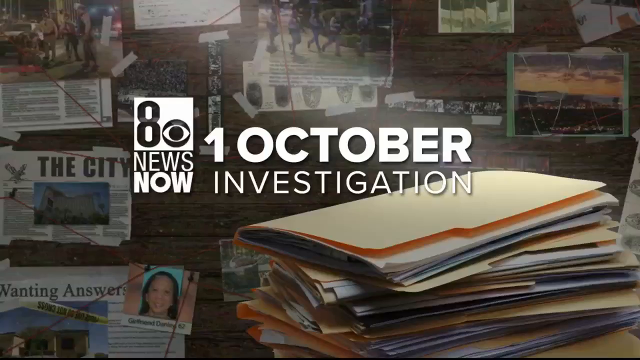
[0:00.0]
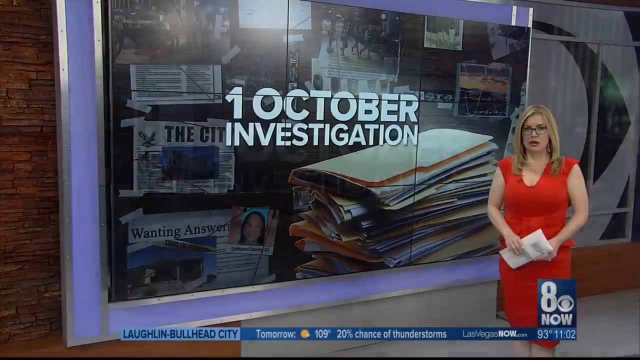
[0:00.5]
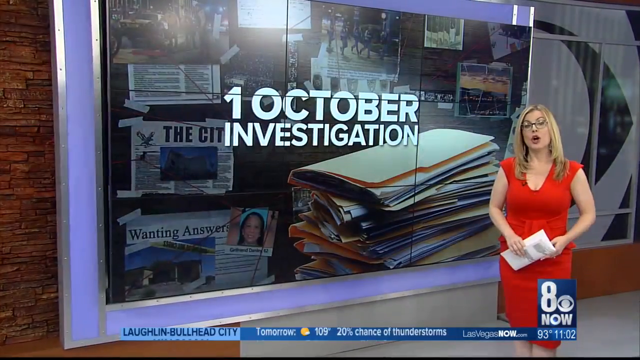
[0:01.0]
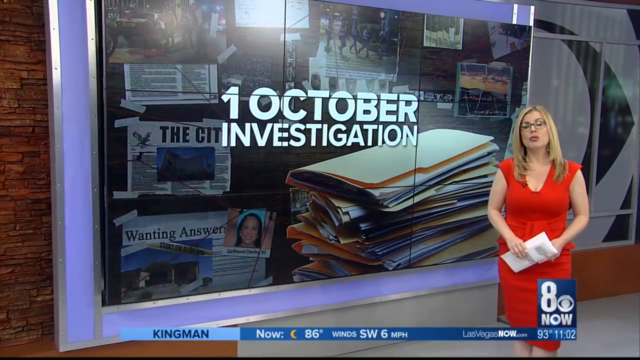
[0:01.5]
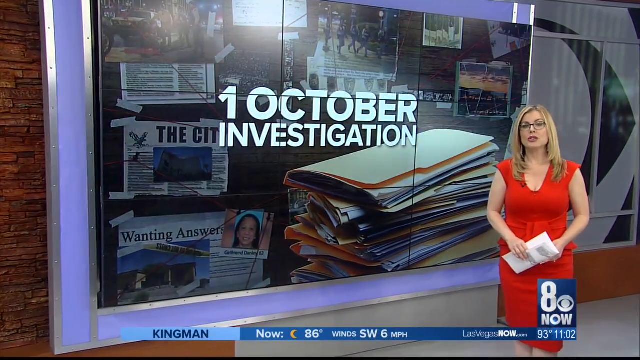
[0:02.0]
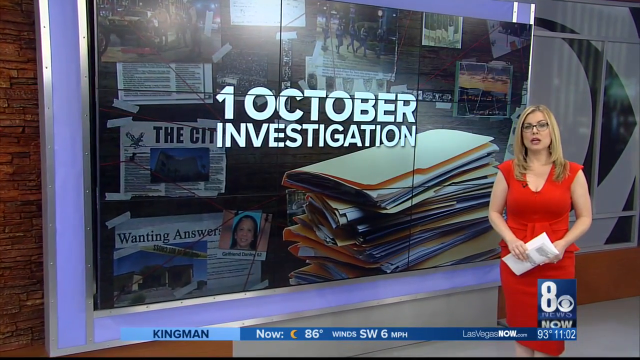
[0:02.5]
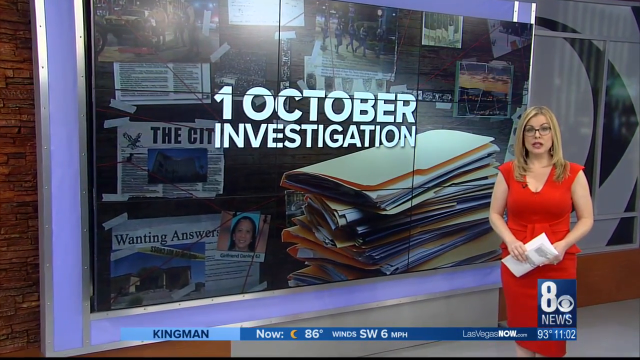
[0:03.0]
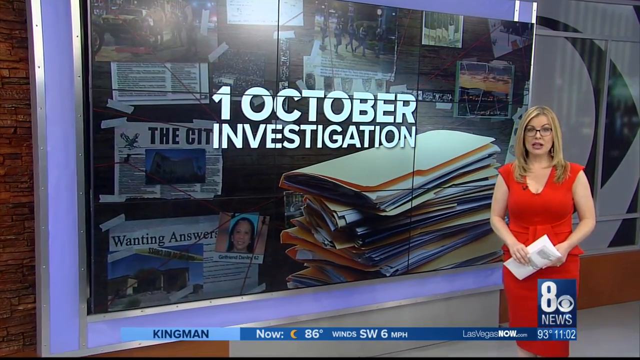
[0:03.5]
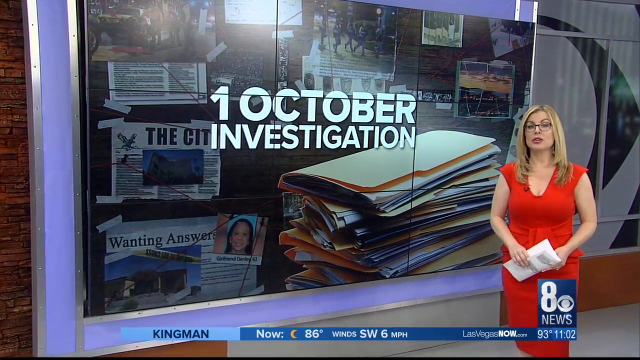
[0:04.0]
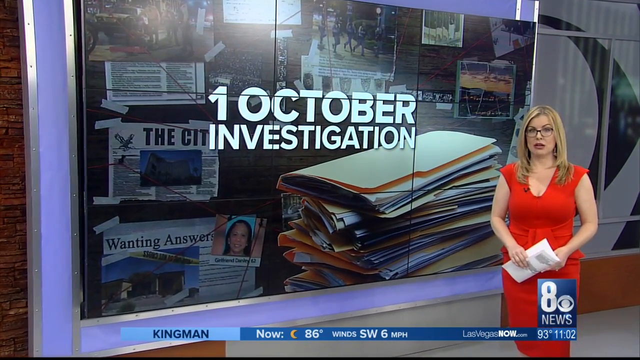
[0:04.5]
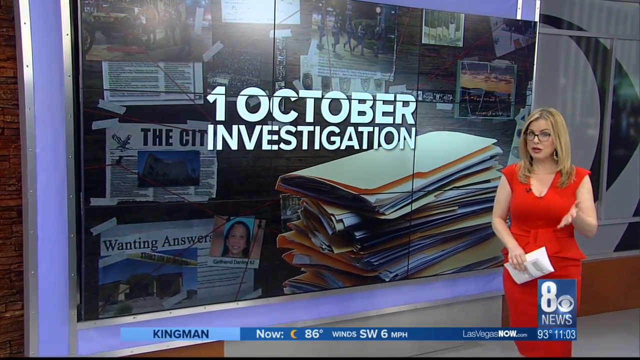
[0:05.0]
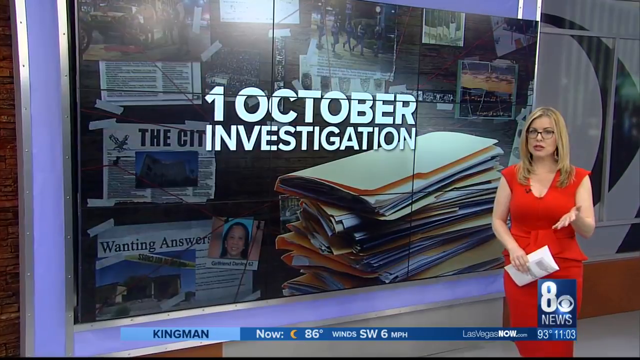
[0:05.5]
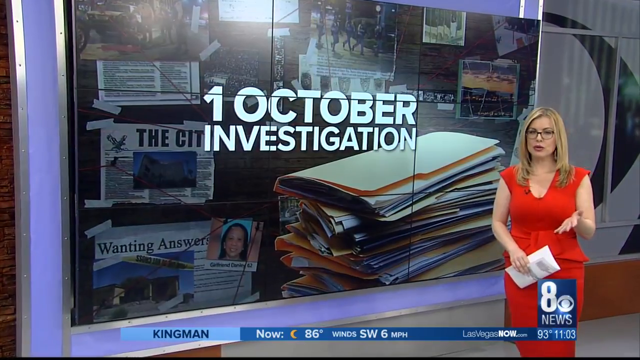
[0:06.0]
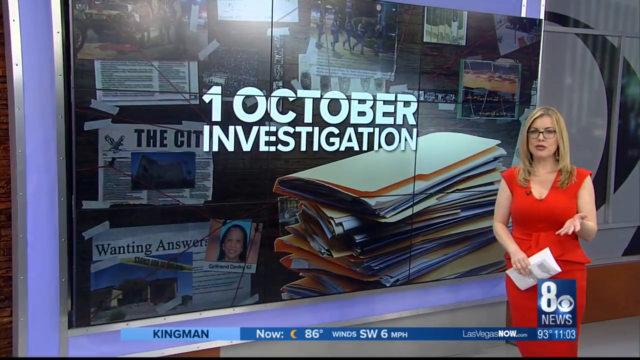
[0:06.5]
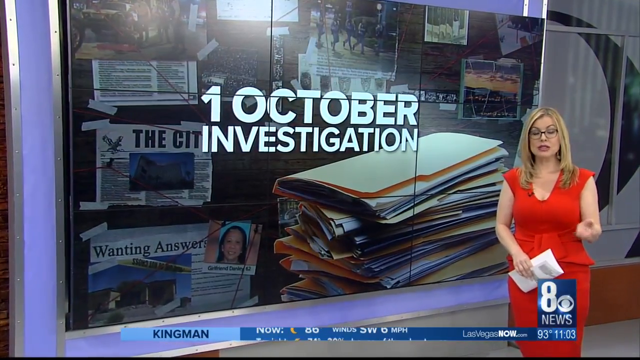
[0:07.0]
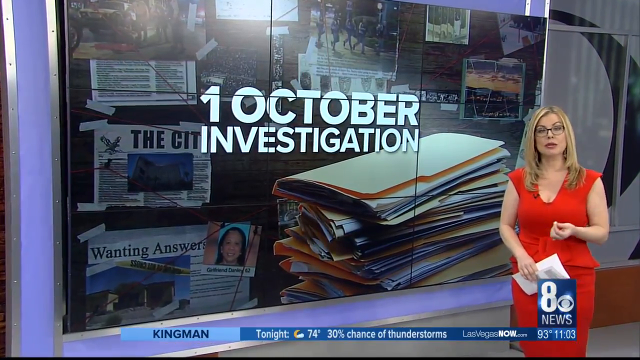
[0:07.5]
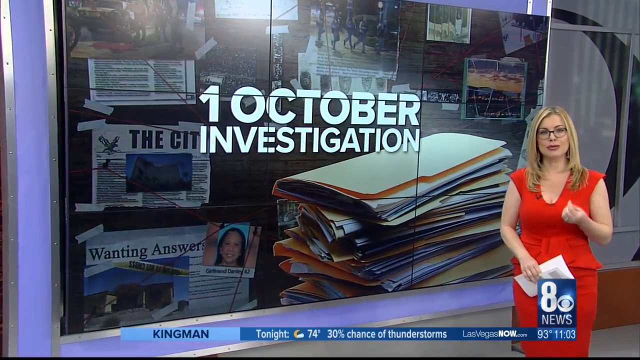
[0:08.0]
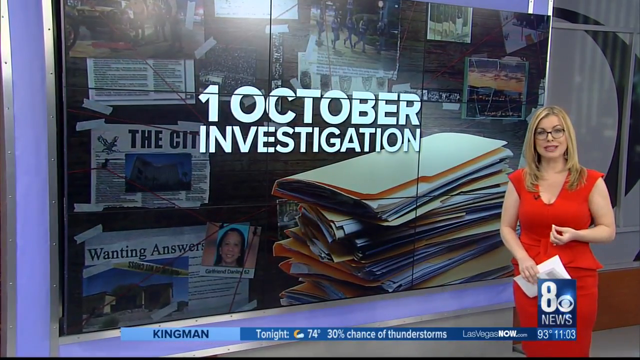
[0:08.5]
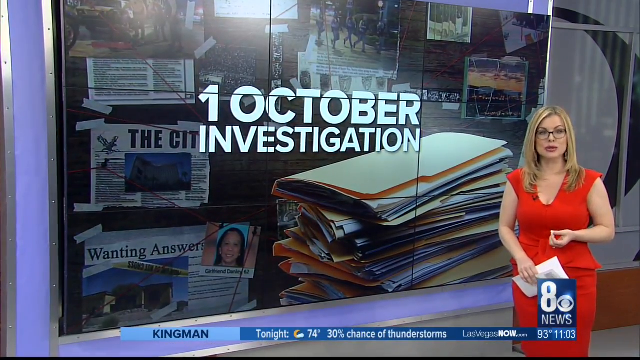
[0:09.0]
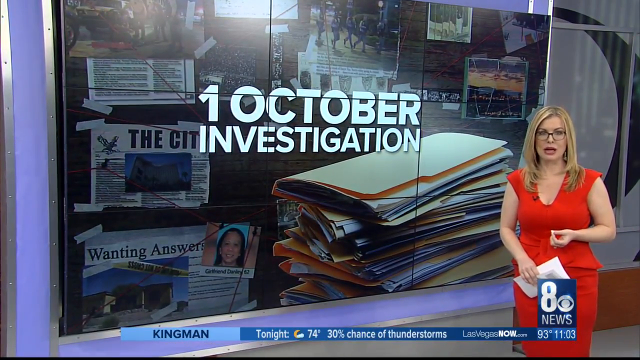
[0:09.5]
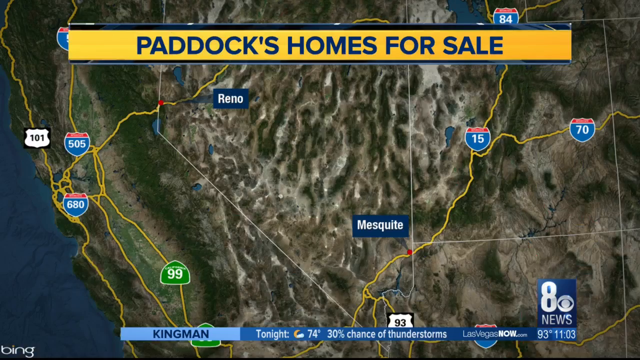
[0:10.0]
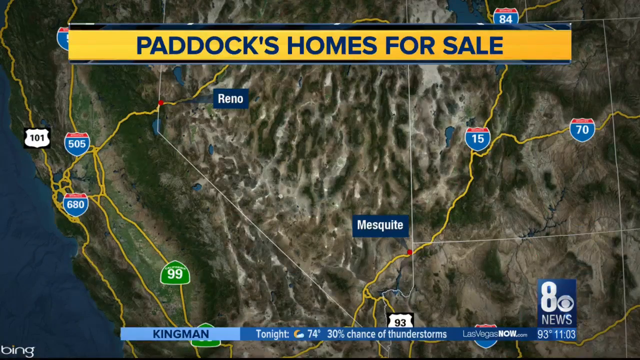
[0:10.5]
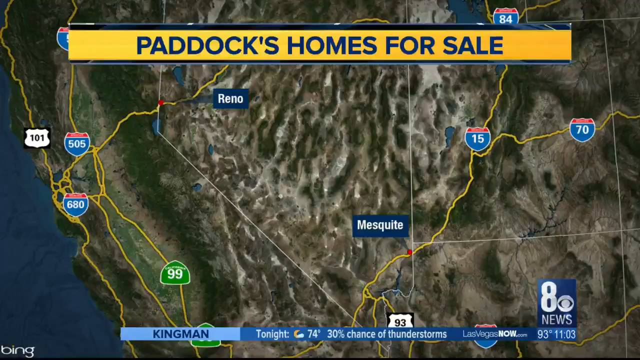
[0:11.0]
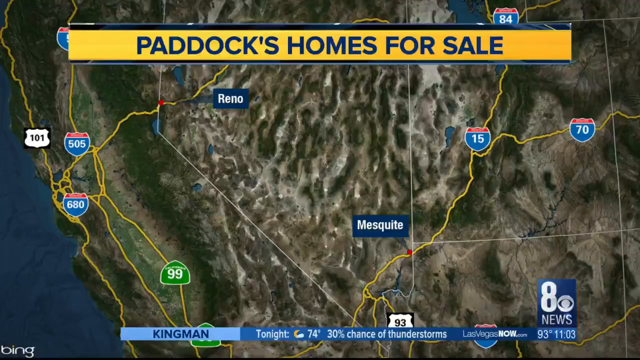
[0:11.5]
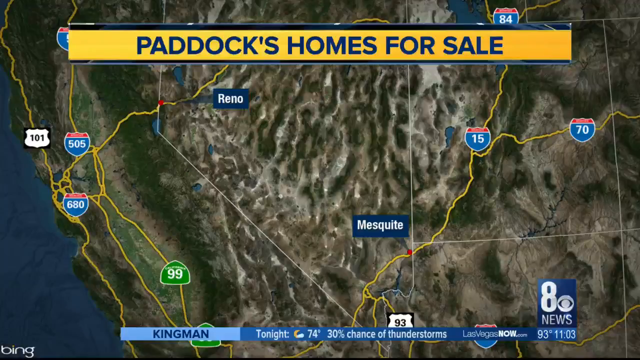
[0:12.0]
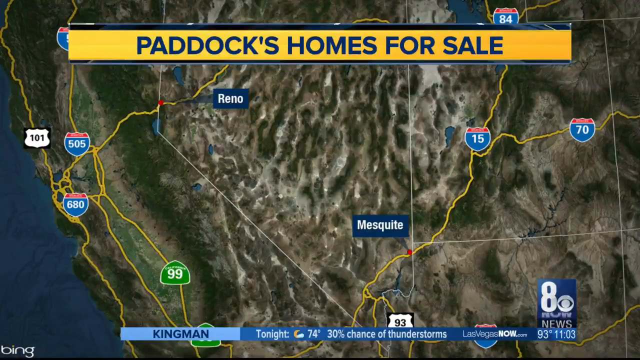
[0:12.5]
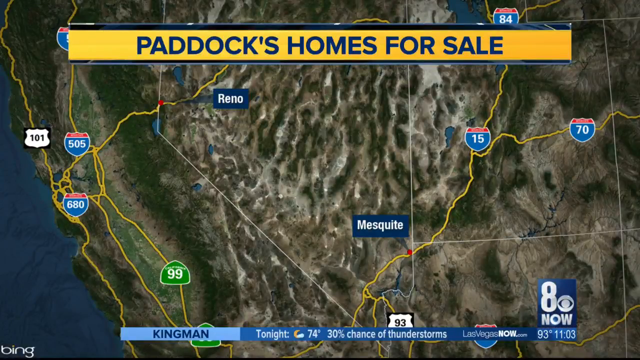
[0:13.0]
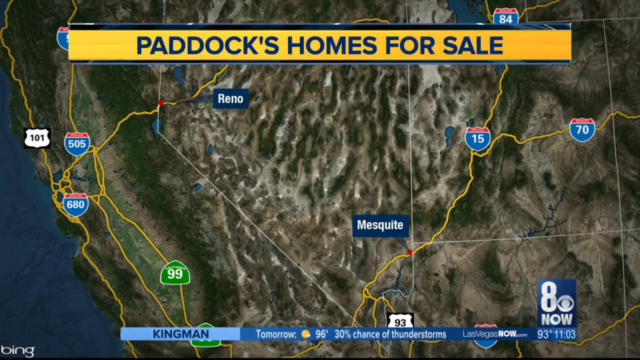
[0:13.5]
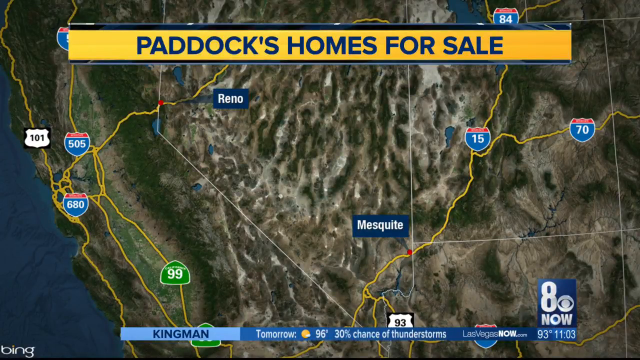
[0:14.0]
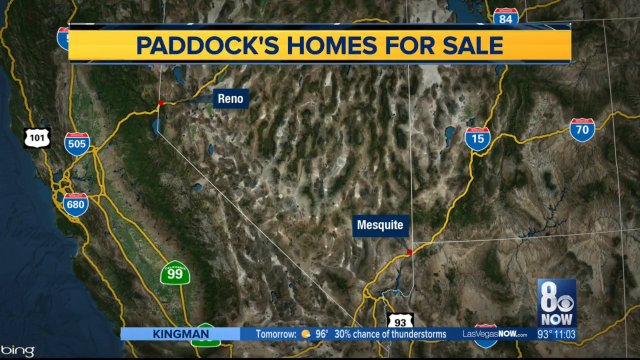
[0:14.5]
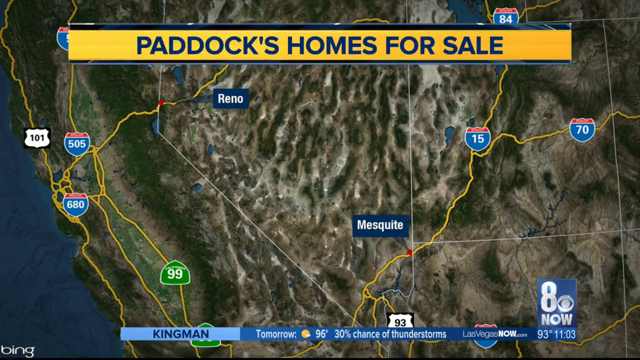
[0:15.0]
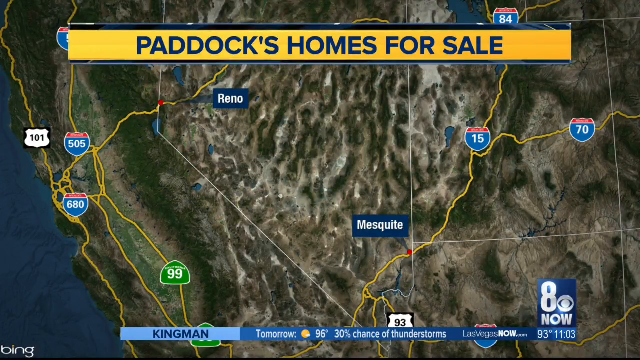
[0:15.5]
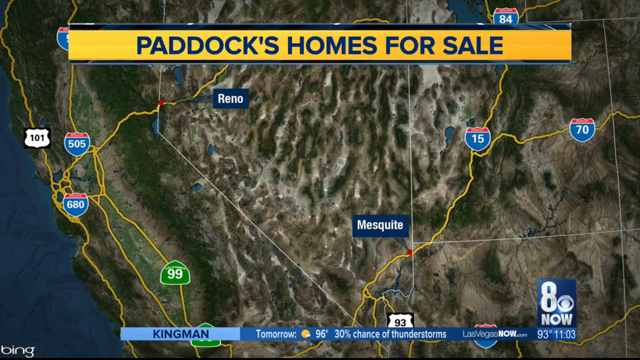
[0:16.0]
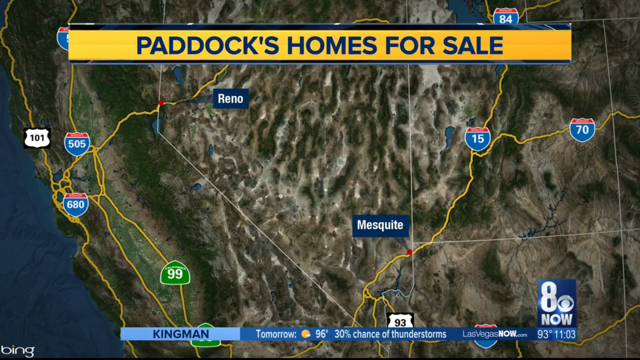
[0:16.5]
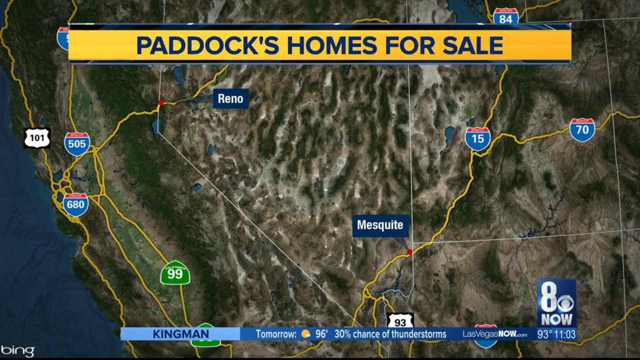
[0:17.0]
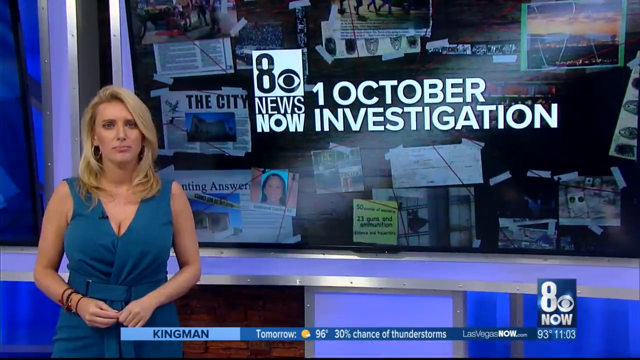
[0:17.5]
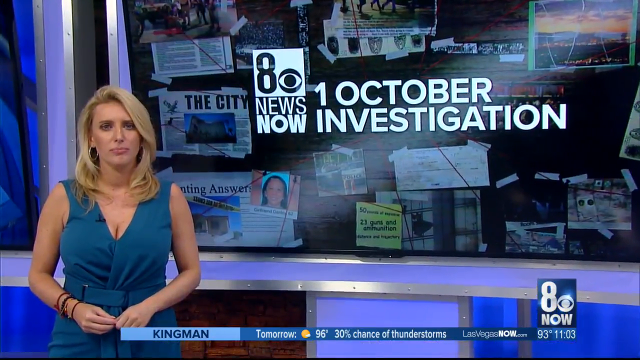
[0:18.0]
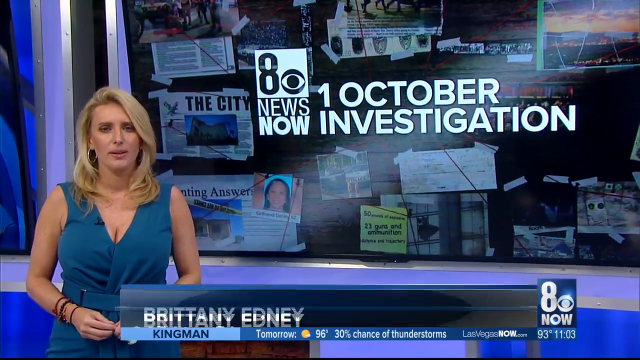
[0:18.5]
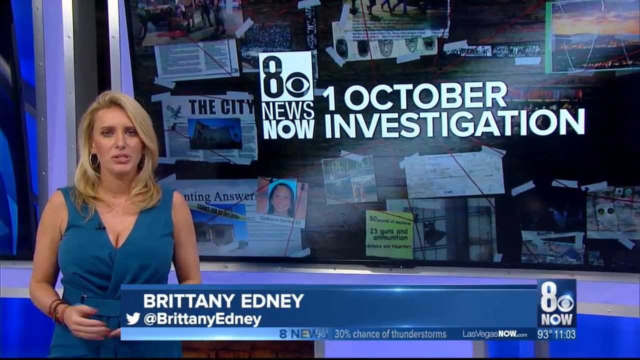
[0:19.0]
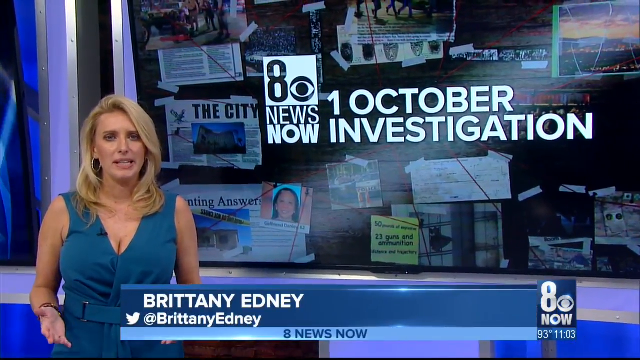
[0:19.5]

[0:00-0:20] The video opens with on-screen text reading "1st October investigation" over a background of a small number of newspaper cutouts on a wall, with files on the floor as well. The scene changes to a news reporter, a woman wearing an orange-reddish dress. On the left side is "1 October investigation" with the newspaper-cutout photo as its background. She talks while gesturing with her hands. Next comes an aerial view of a place with the text "Paddock's homes for sale" and the name "Reno Mesquite"; lines on the landscape possibly mark roads. The video returns to the newsroom, where Brittany Edney appears with a Twitter handle below her name. The screen also says "Kingman" along with the current weather, and the website "lasvegasnow.com".